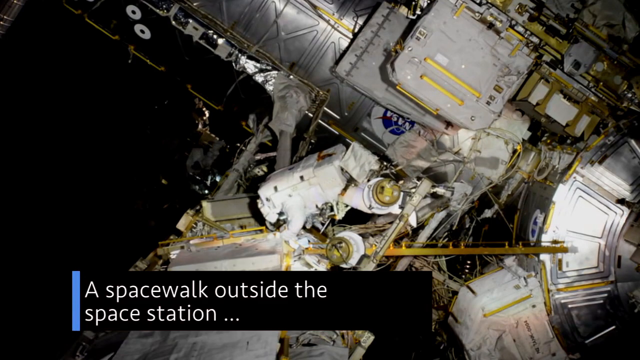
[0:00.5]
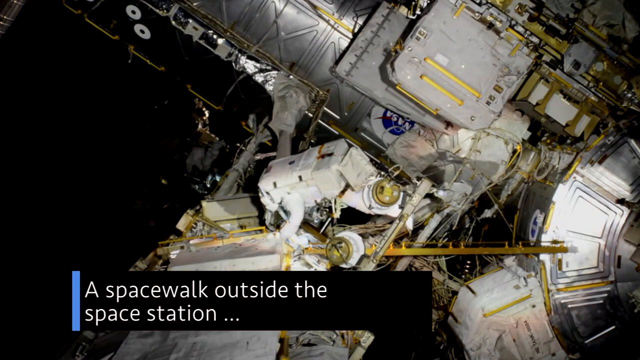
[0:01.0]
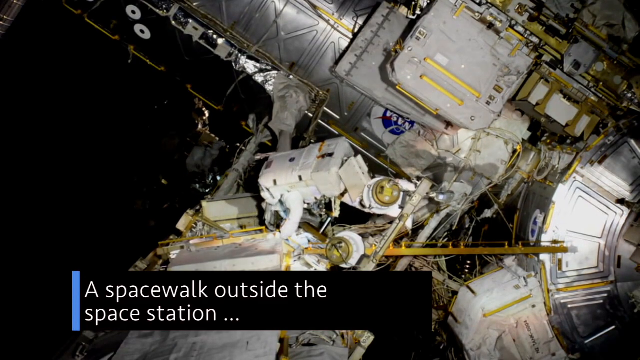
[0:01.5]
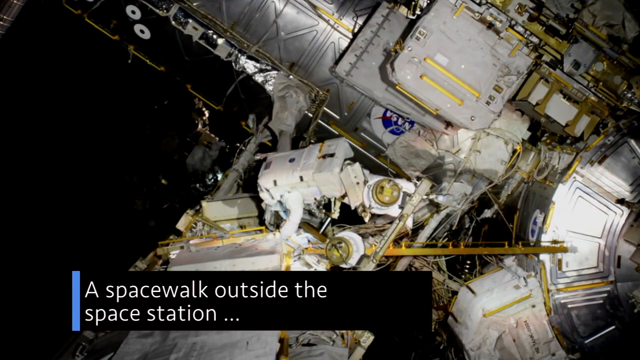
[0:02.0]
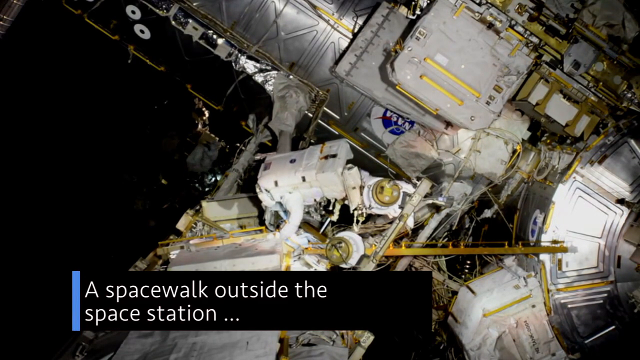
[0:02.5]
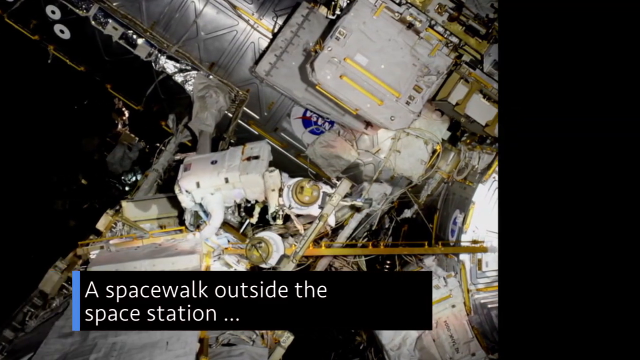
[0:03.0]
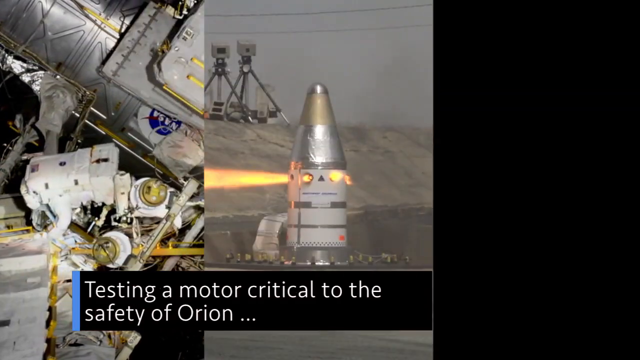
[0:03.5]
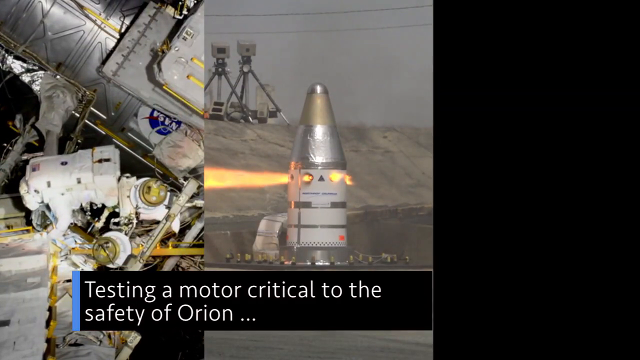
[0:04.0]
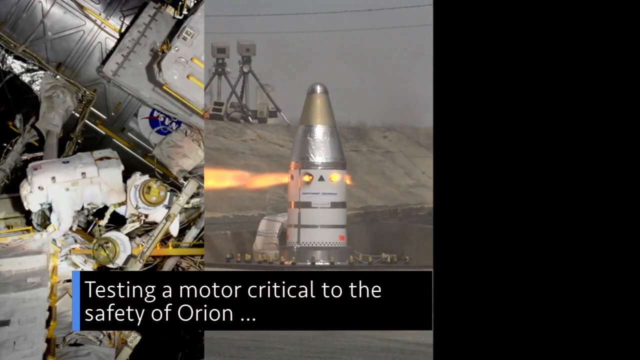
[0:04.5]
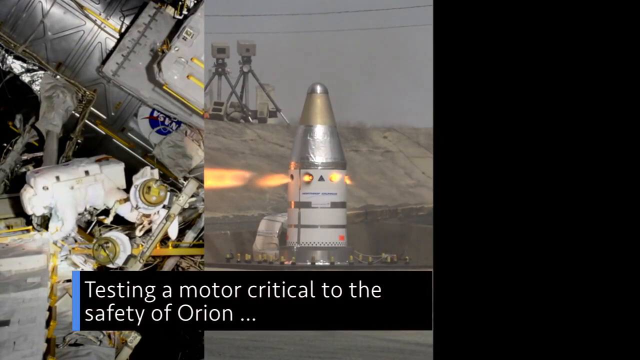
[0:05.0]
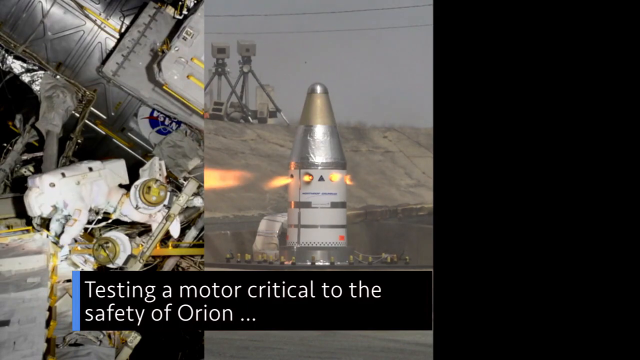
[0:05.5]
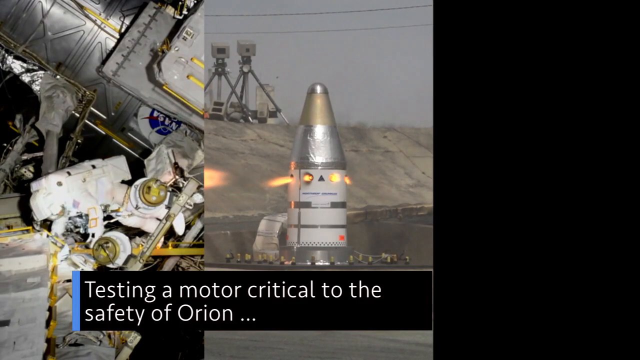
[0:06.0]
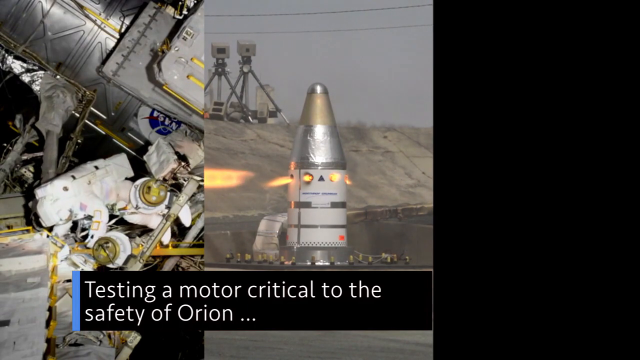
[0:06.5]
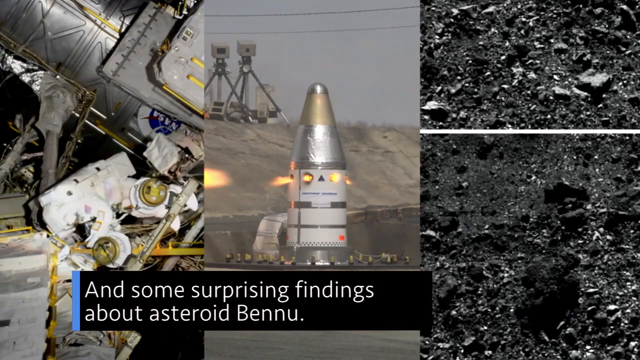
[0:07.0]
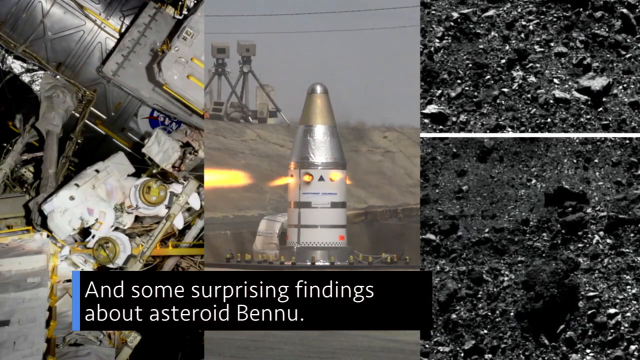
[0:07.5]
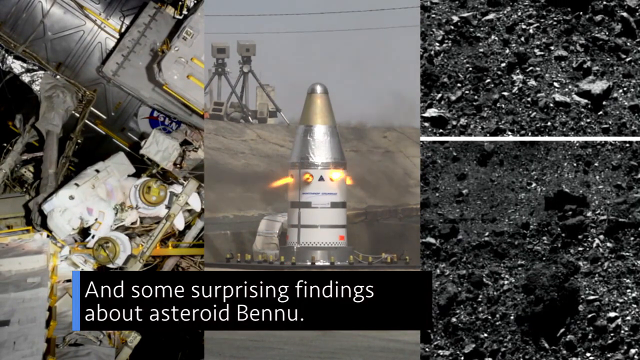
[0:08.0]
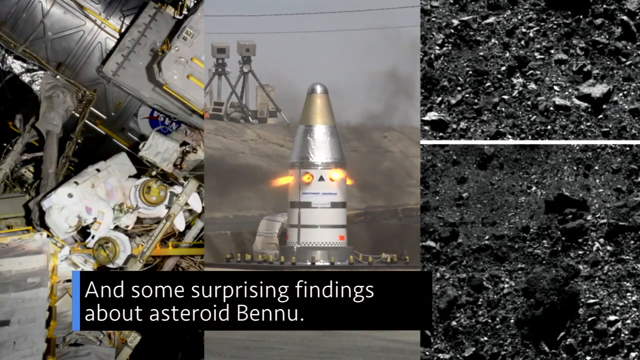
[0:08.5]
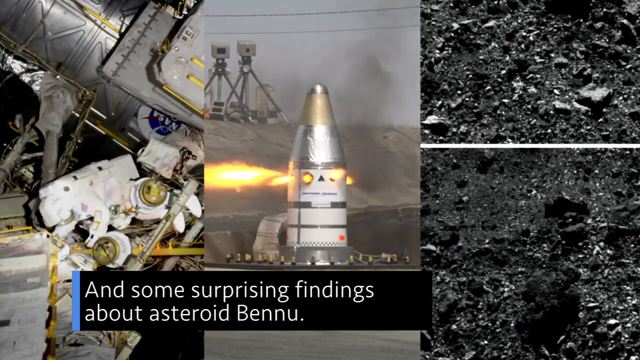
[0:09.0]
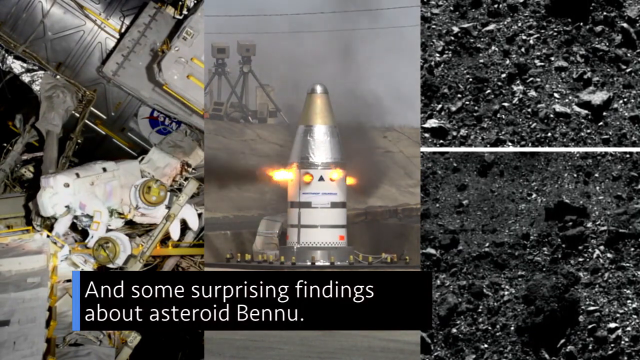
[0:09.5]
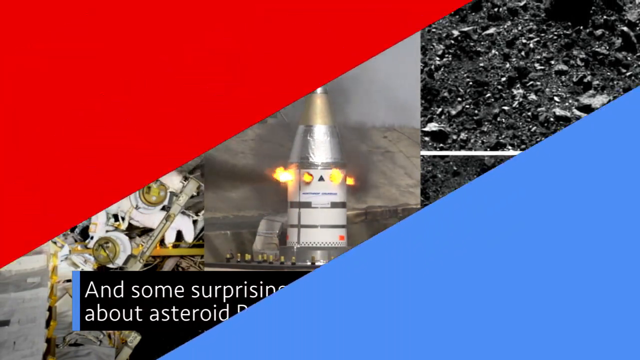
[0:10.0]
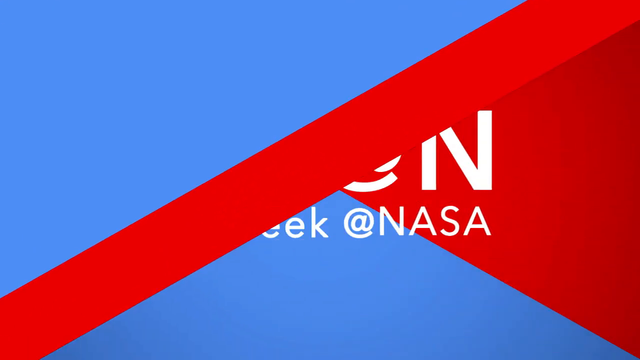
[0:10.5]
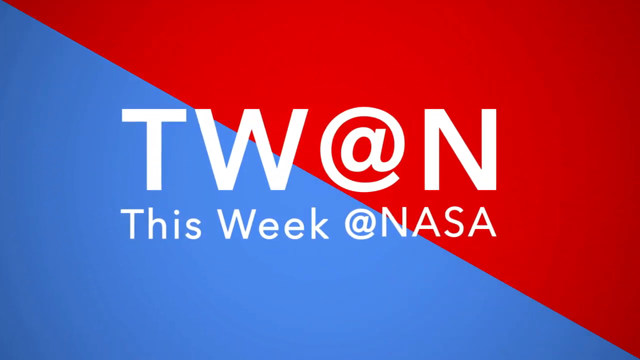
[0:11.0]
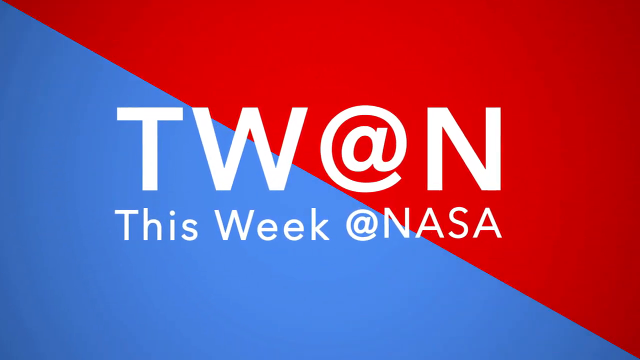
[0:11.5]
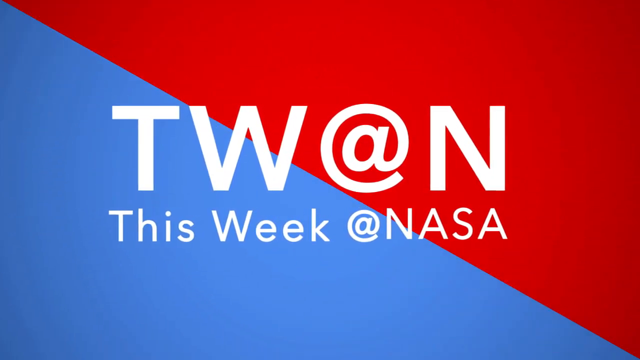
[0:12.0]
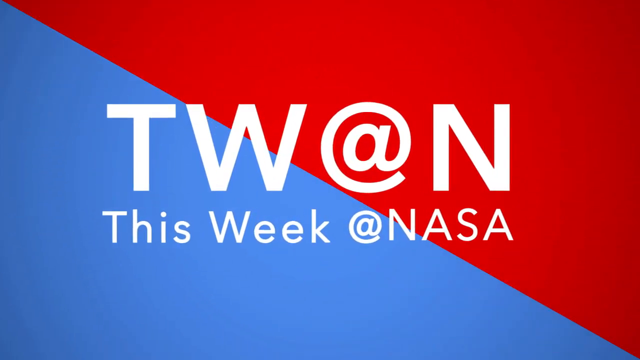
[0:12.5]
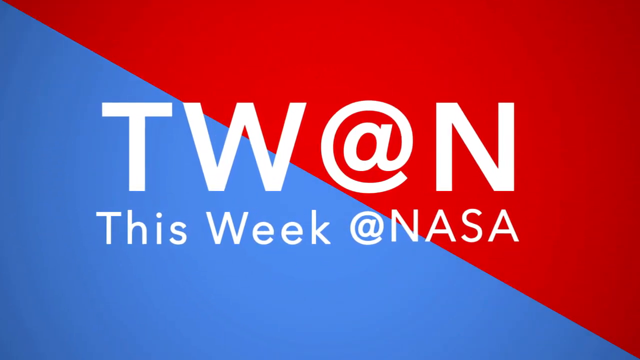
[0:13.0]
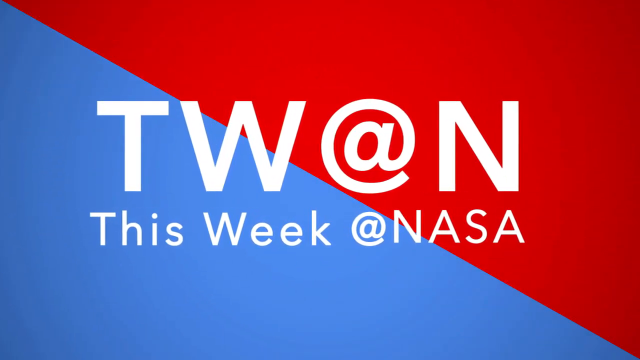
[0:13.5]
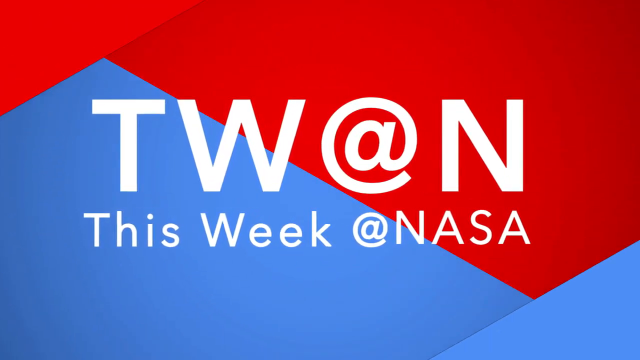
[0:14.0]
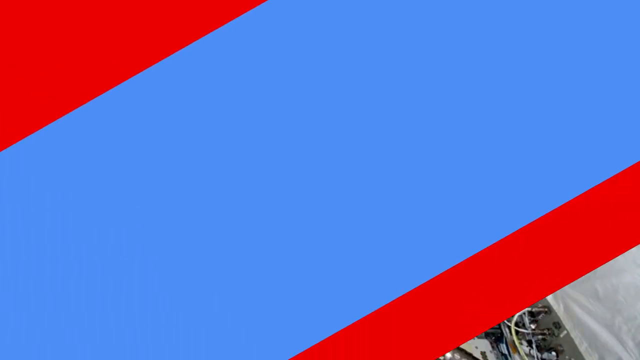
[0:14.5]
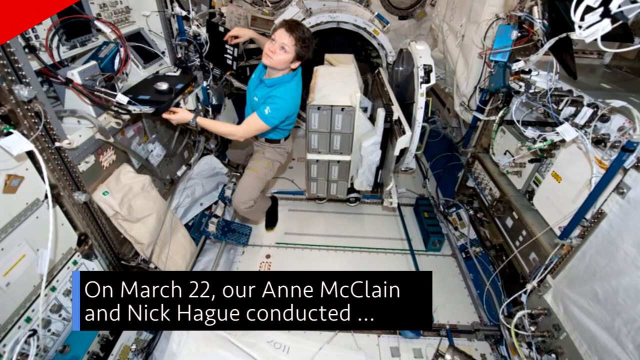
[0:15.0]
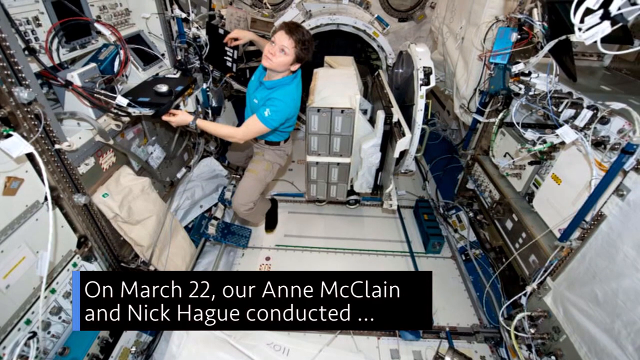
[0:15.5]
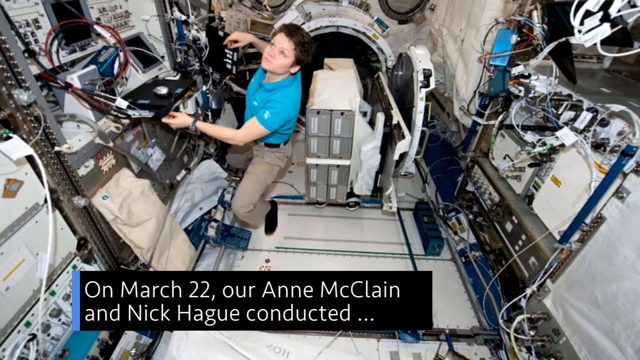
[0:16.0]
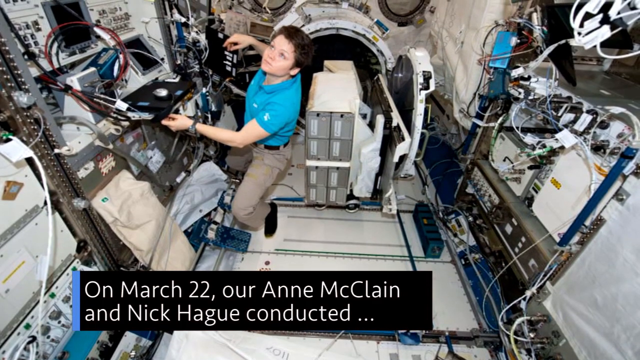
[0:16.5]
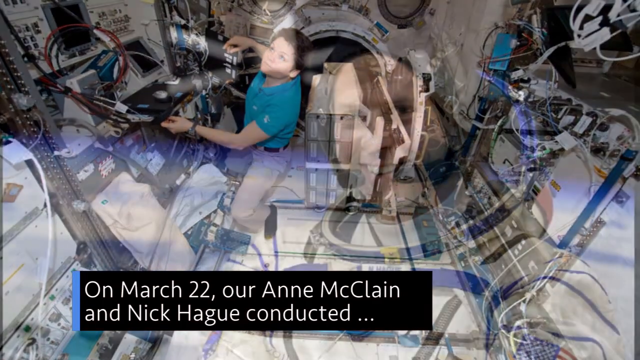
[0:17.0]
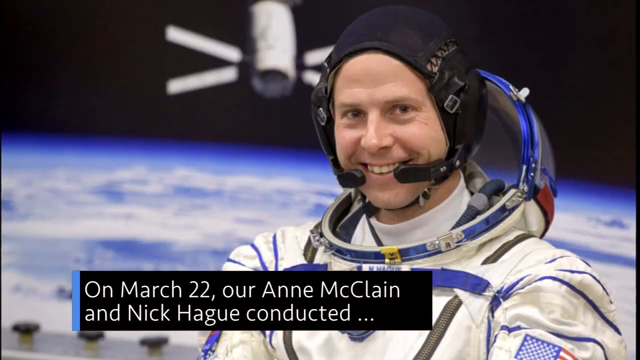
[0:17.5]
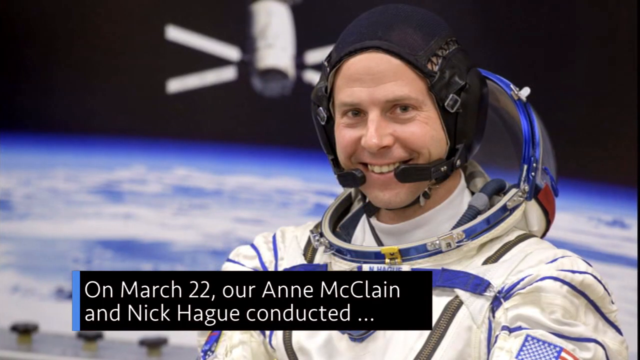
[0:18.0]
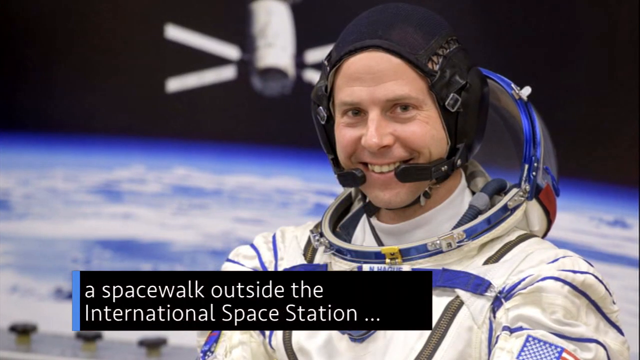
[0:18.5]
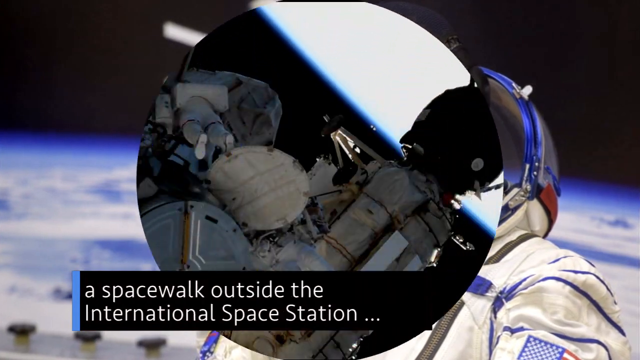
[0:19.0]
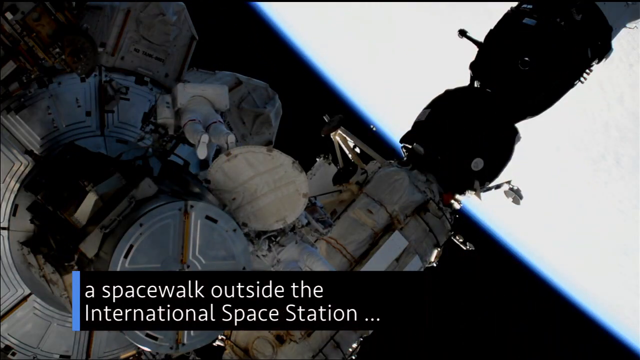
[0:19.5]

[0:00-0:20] The video shows the International Space Station, with an astronaut in the center of the screen. It then switches to a split screen: on one side is a rocket whose boosters look like they are firing, and on the other the astronaut moves around. The astronaut looks like a big square body moving around on the outside of the space station during the spacewalk, probably doing repairs on the outside of the station. The scene transitions to shots of the moon, then to a red and white logo, "This Week at NASA." Another scene follows, about March 22, when Anne McClain and Nick Haig conducted a spacewalk outside the space station, probably checking for damage or doing repairs.